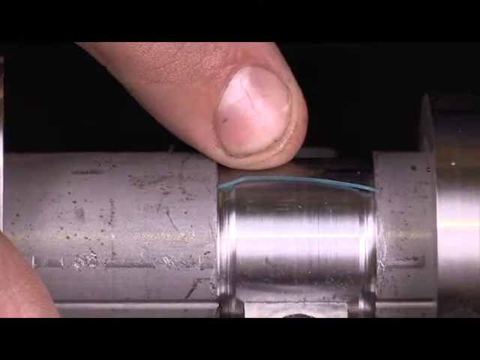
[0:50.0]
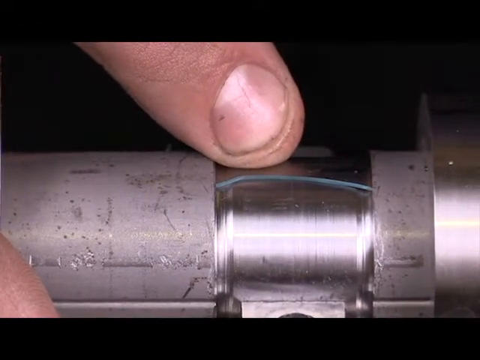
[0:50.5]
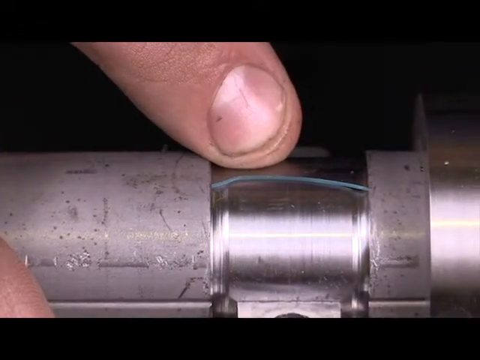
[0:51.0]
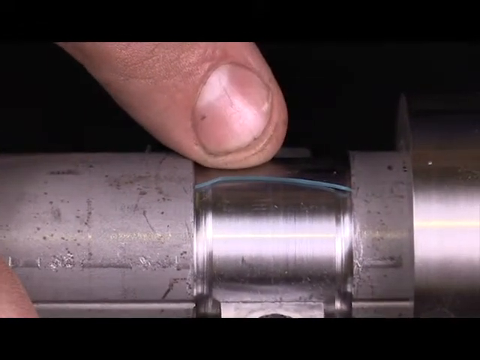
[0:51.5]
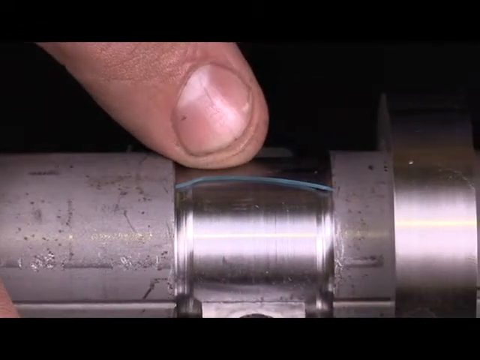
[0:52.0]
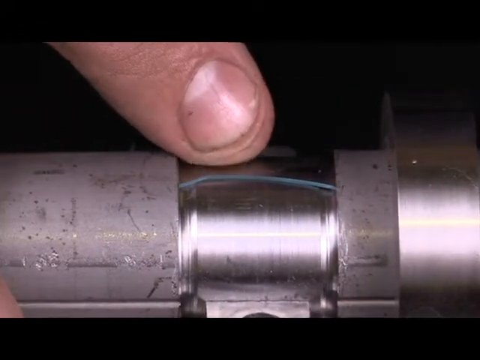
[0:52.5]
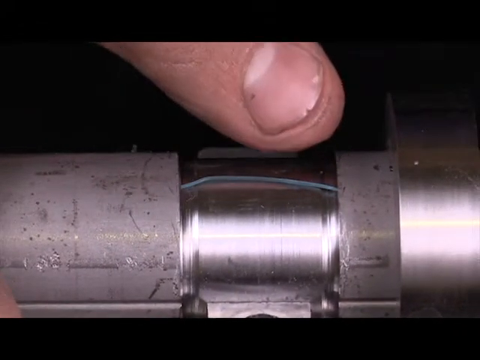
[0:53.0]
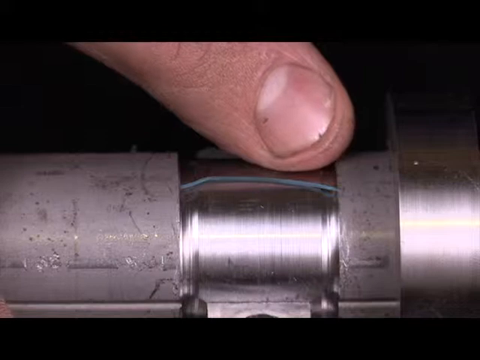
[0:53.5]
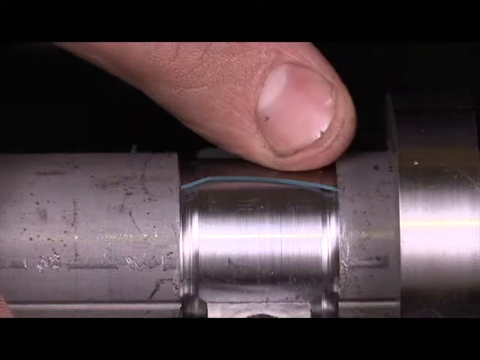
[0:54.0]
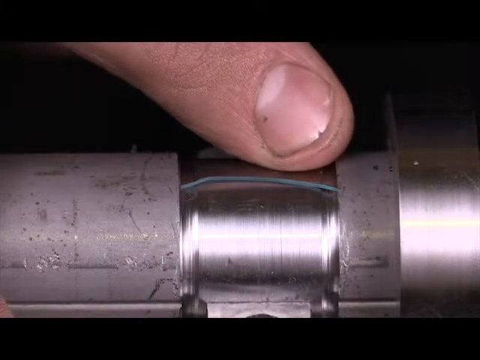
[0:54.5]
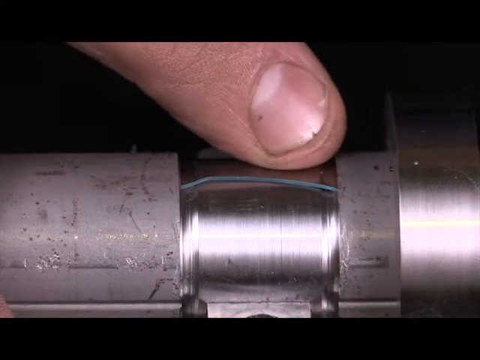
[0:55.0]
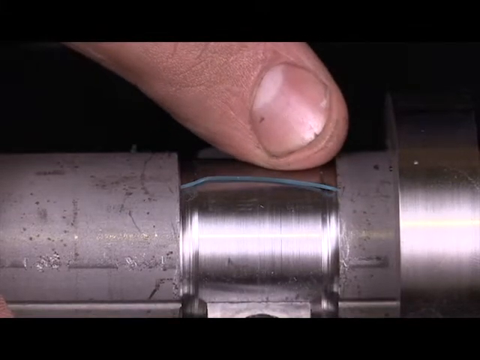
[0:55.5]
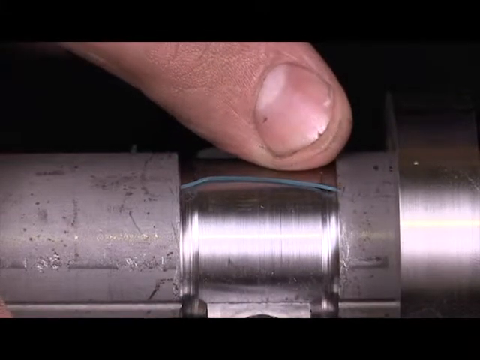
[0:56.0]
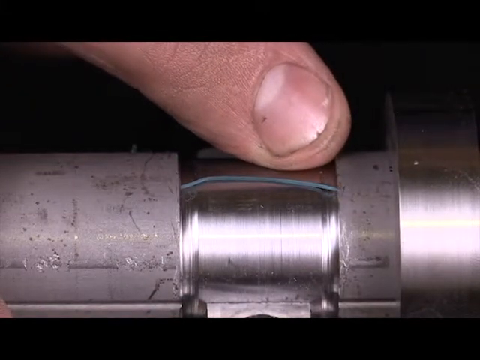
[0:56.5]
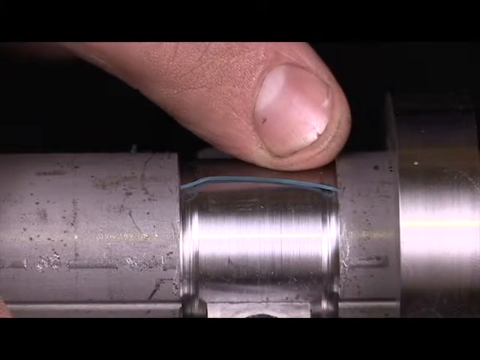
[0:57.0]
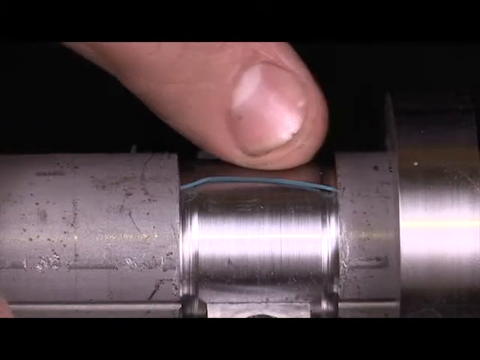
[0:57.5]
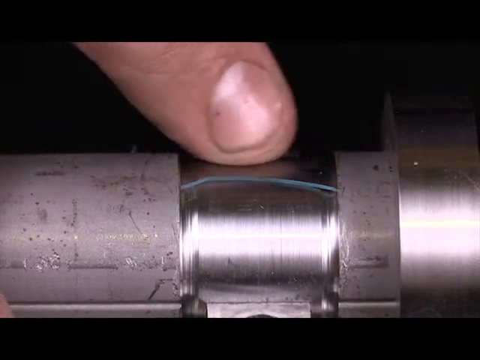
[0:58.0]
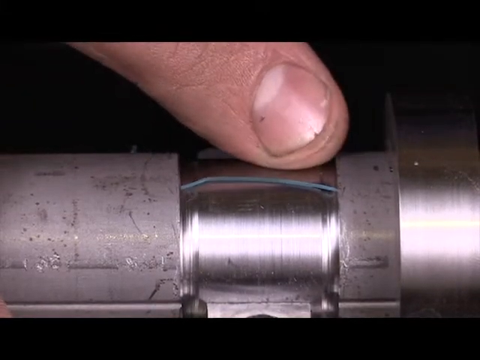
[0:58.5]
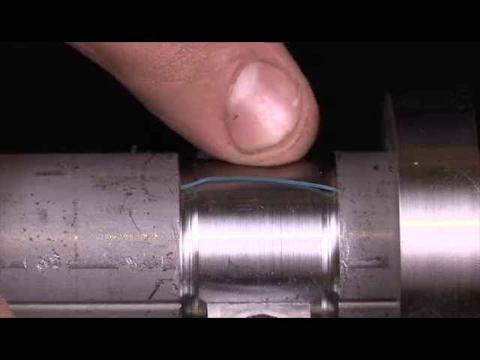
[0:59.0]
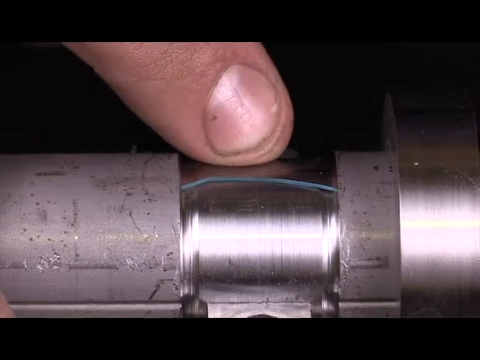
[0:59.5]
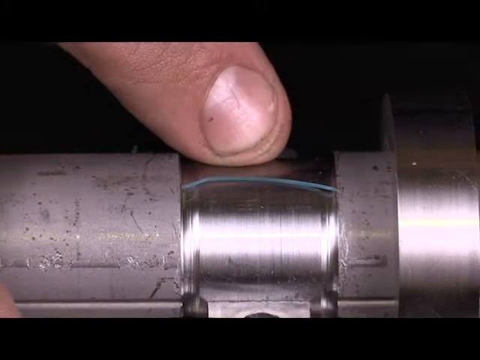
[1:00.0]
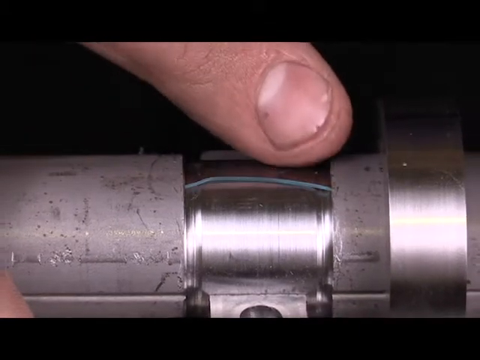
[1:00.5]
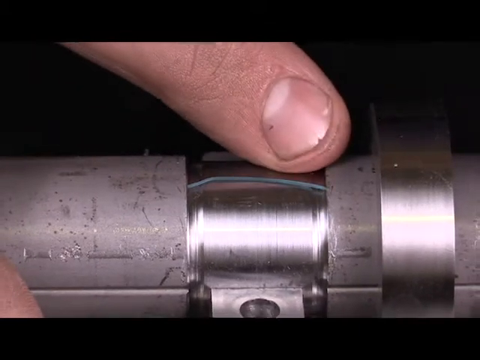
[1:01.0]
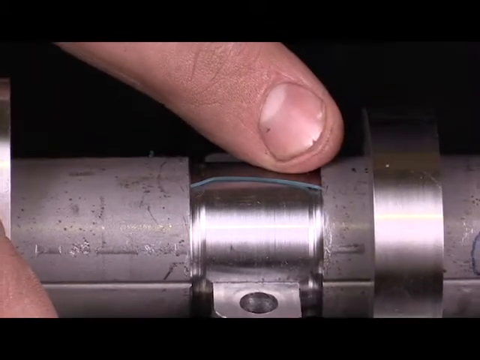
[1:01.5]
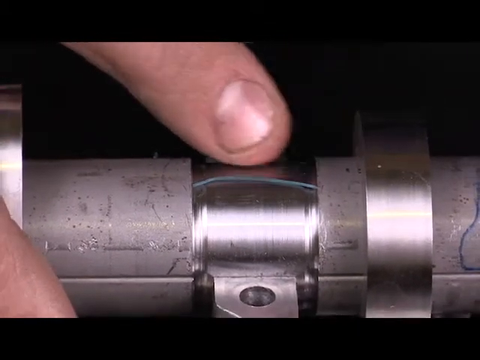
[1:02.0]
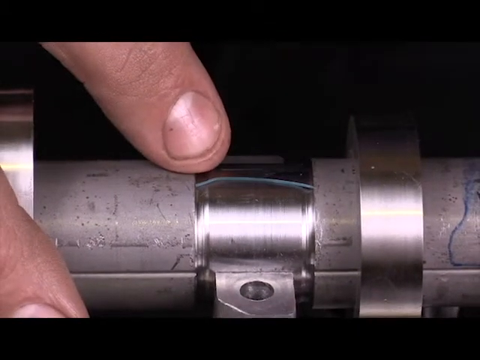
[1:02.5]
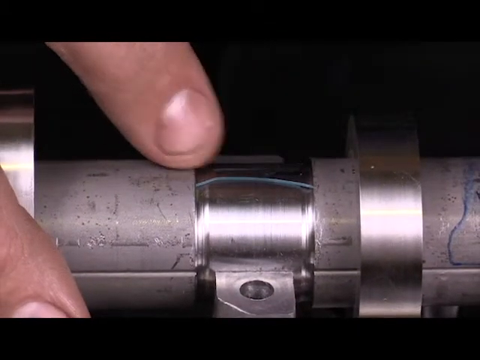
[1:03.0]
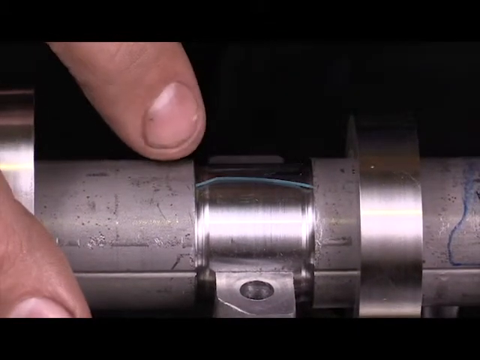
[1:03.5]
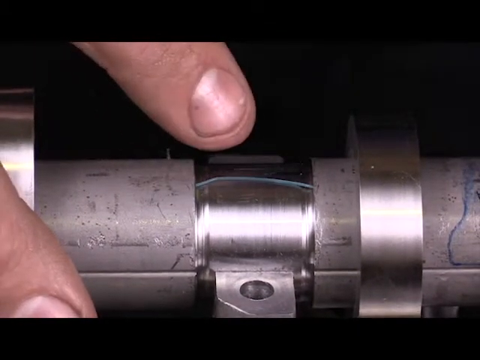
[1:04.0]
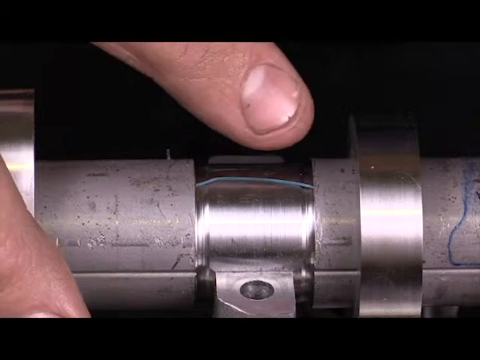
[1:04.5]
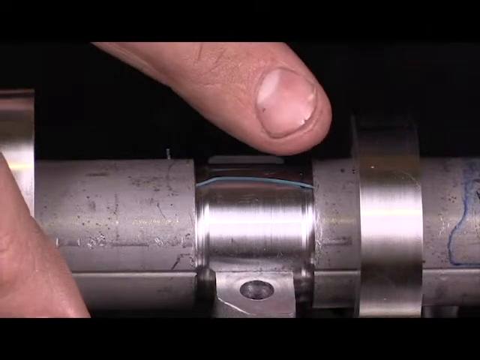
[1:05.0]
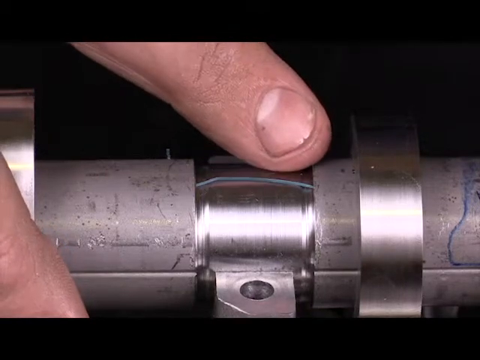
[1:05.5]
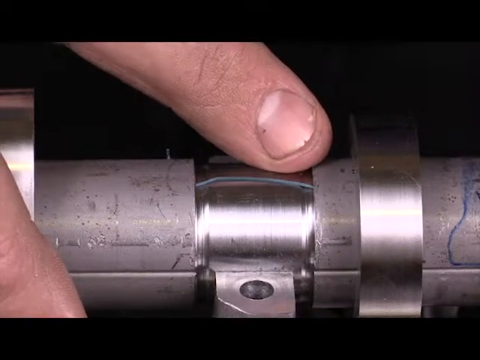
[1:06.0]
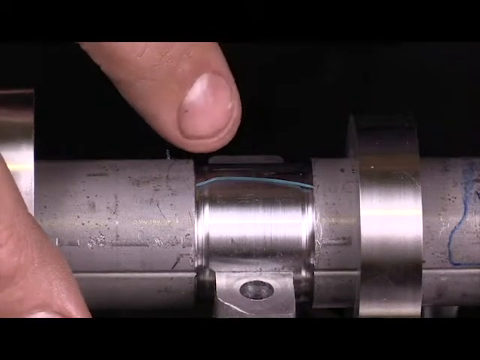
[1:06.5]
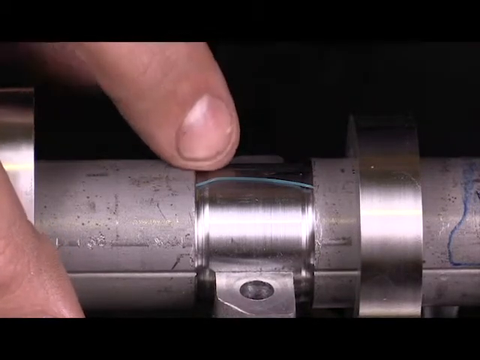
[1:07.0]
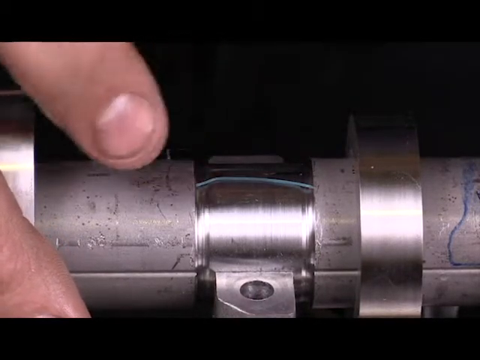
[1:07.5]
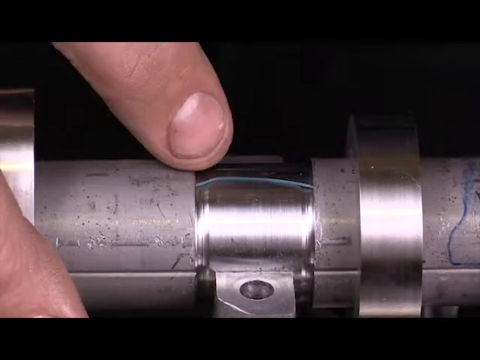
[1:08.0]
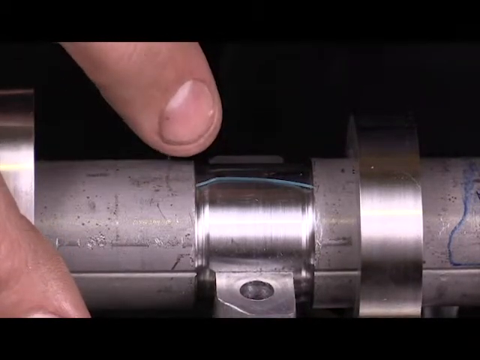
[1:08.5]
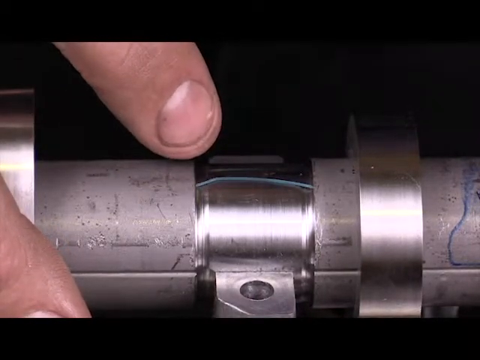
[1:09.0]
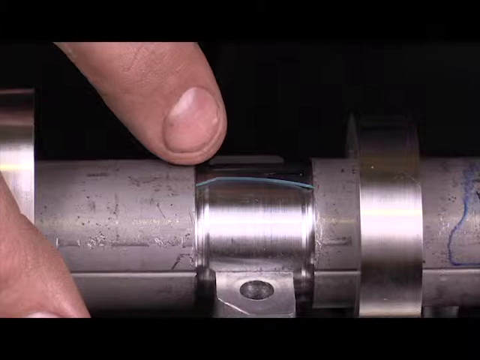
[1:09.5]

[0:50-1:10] A finger rests on a cylinder-shaped piece of metal with two different metal tones: a really shiny chrome piece and another part that is very dull and not shiny. The finger is male and looks white. It points at the chrome part of the cylinder, lifts, lowers back down onto the chrome, and rubs left and right a few times. It lifts, lowers and touches again, comes off, moves to one side and then the other. The finger mostly stays on that one section of chrome, mostly sliding and sometimes lifting. The camera zooms in a little and then zooms back out. Mostly only the finger is visible rather than the whole hand, with one other finger just visible.